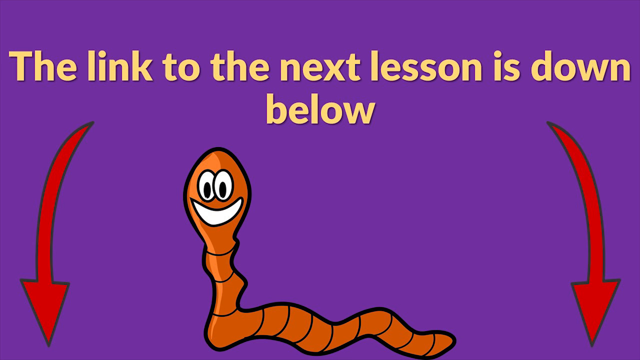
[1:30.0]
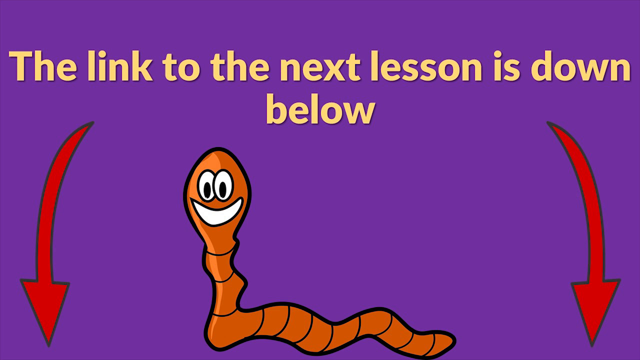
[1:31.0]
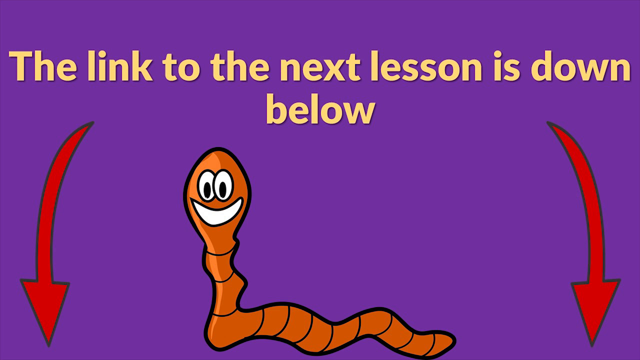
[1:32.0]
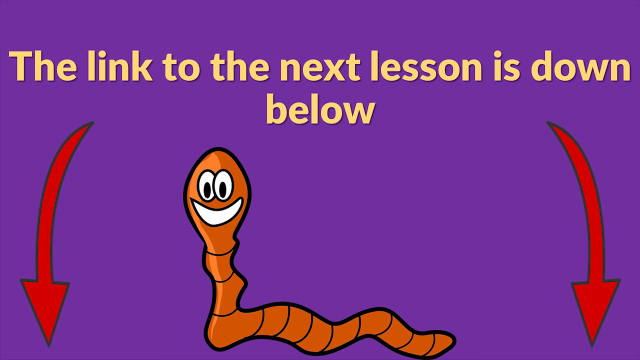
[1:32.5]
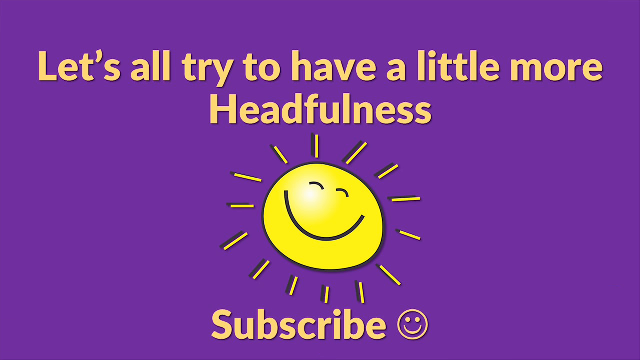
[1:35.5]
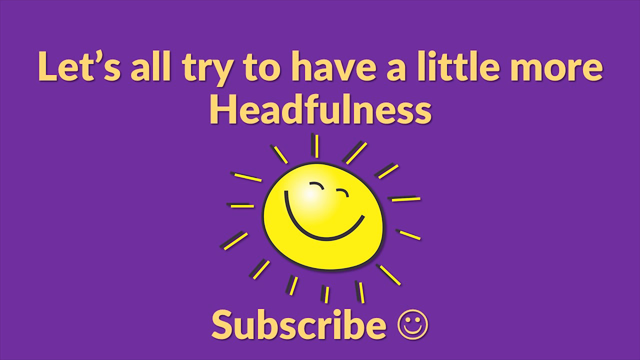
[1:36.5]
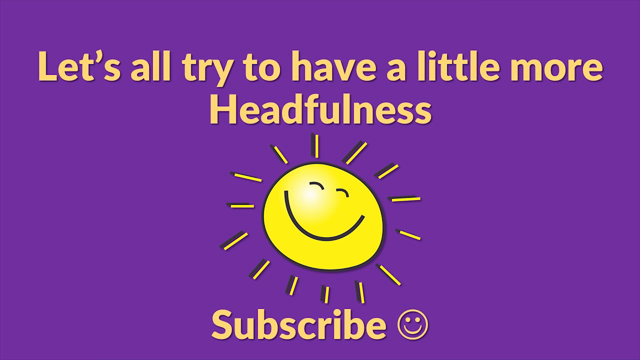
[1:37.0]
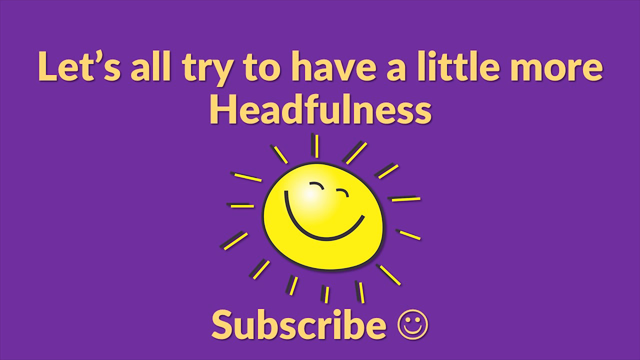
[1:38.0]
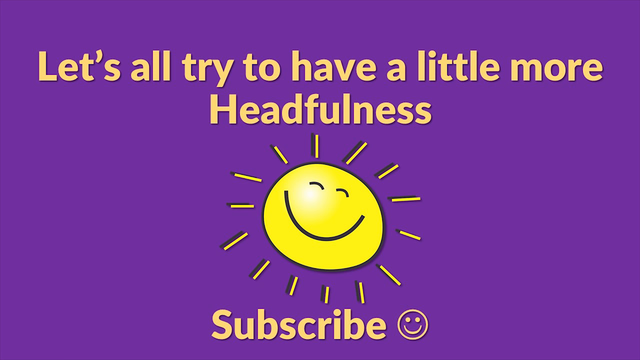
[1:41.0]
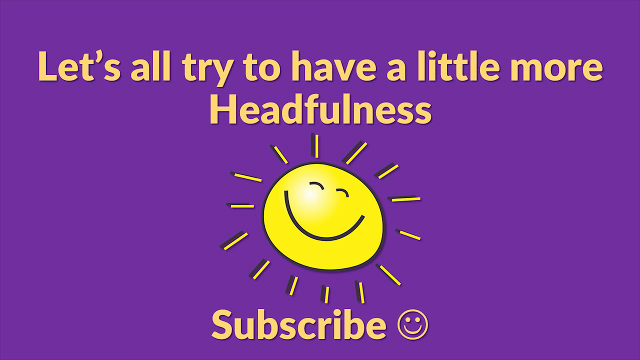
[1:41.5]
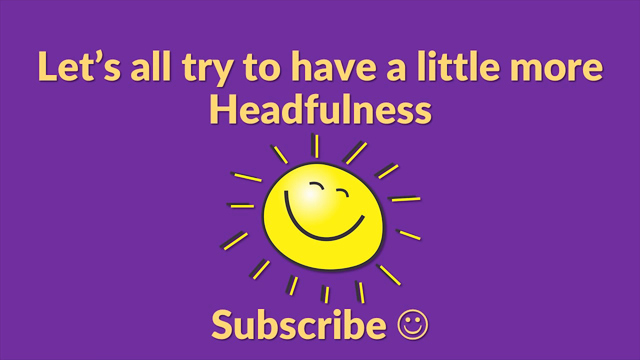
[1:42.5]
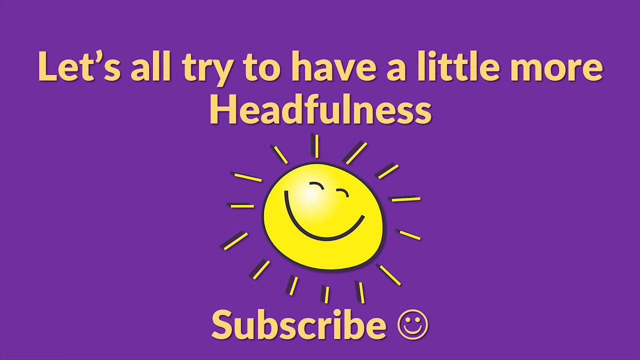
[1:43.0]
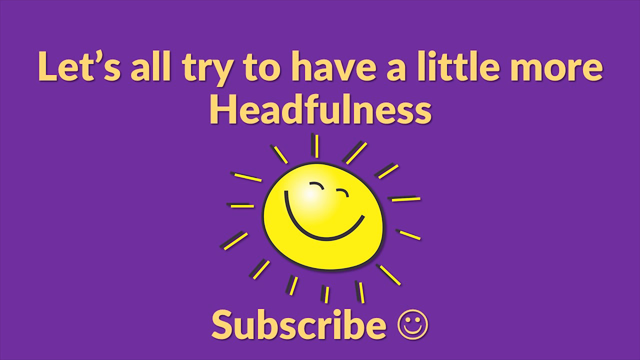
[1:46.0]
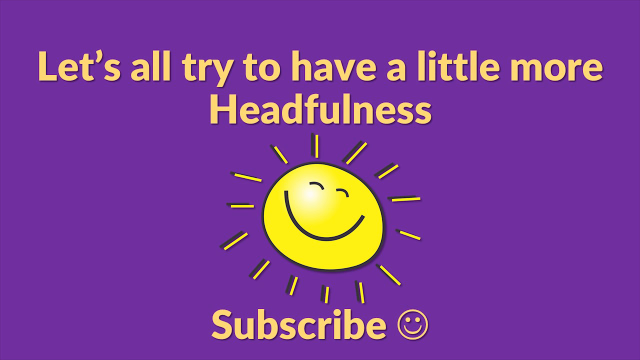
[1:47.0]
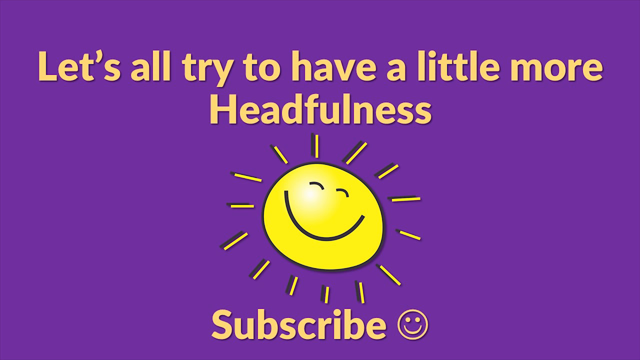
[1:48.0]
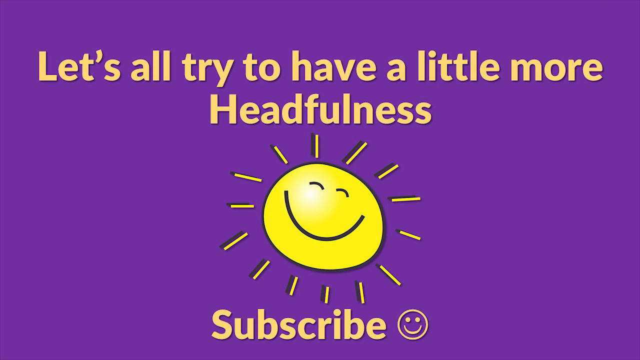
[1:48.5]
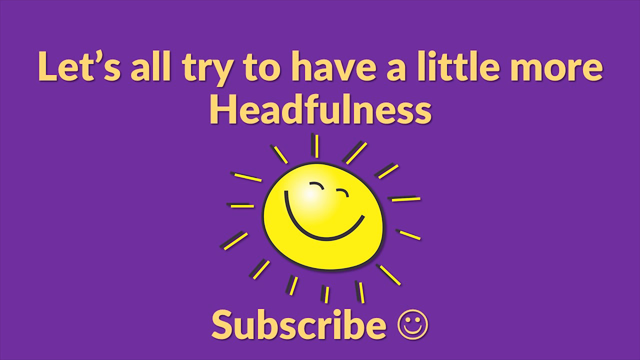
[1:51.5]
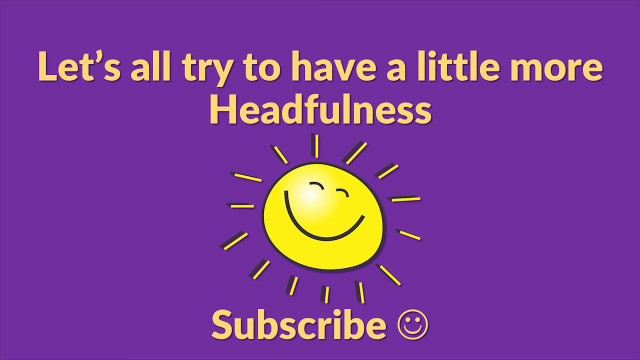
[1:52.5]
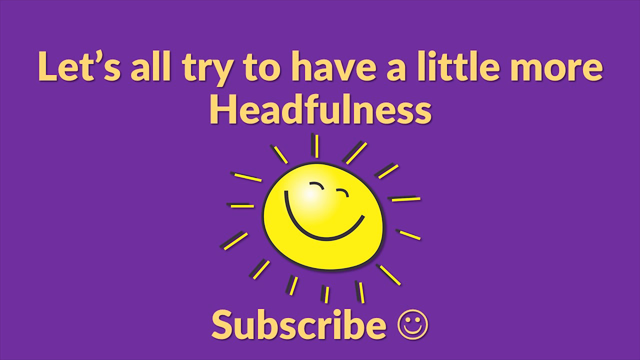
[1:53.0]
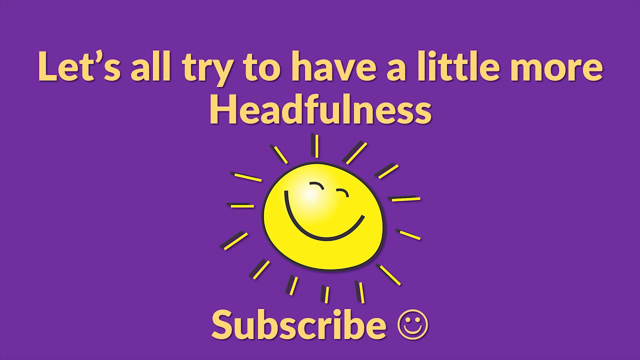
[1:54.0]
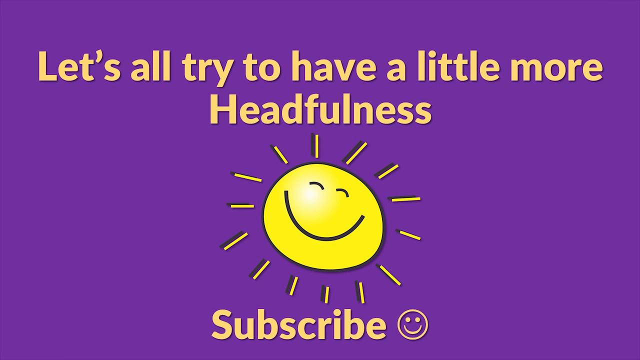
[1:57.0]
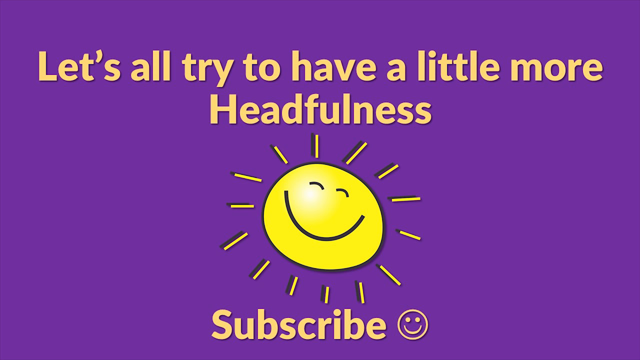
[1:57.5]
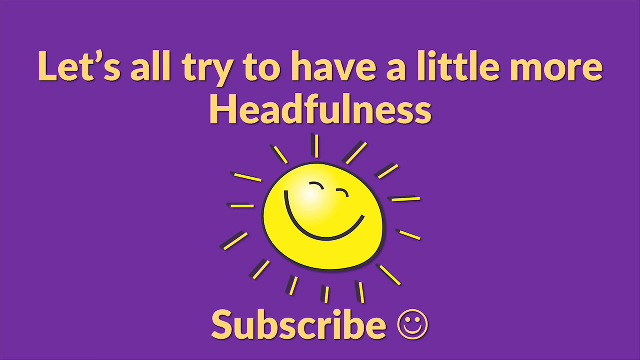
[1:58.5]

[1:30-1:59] On a purple background, yellow text reads: "The link to the next lesson is down below". Long red arrows on the sides point down, and between them, in the centre of the page, is a very big animated worm with eyes and a wide smile. The next screen says: "Let's all try to have a little more headfulness." Under this text is an animated sun with a smiley face and closed, winking eyes. The sun is an uneven circle. Below that, text says "subscribe" with a smiley face.